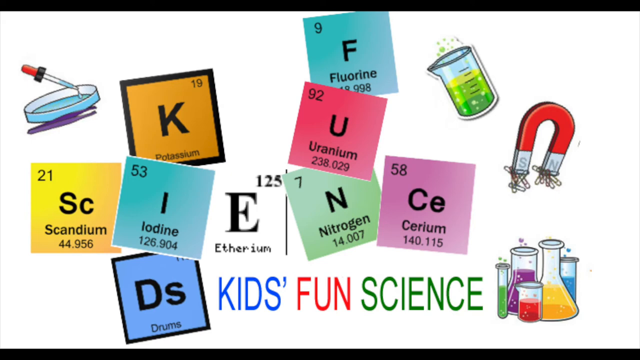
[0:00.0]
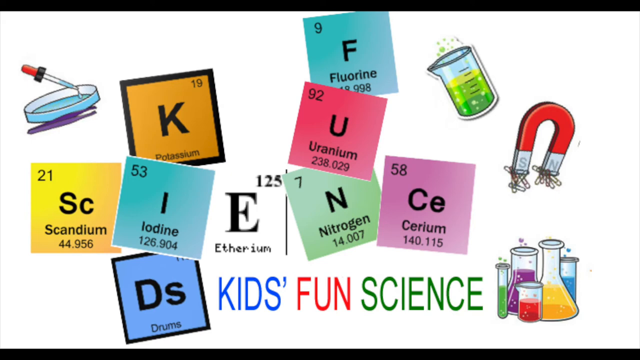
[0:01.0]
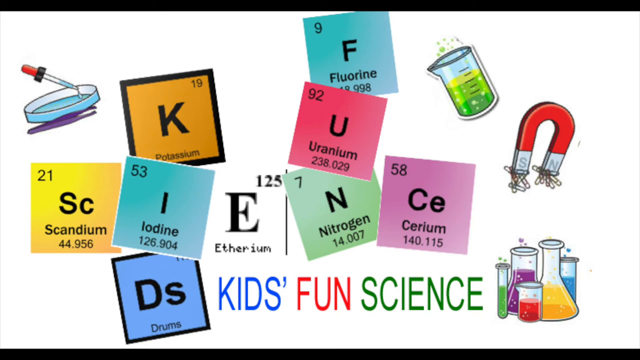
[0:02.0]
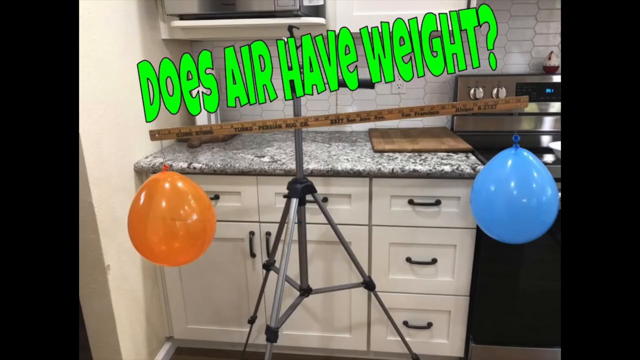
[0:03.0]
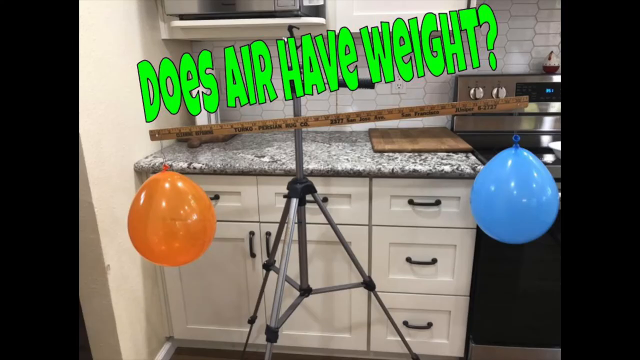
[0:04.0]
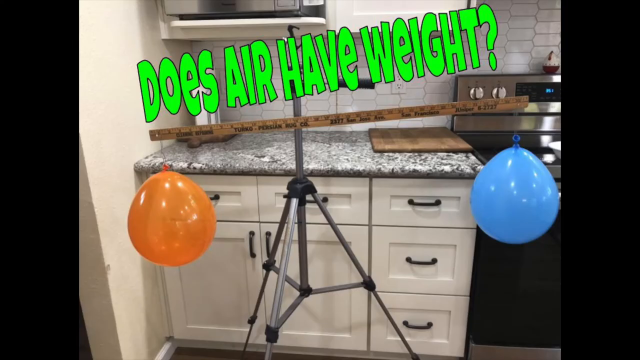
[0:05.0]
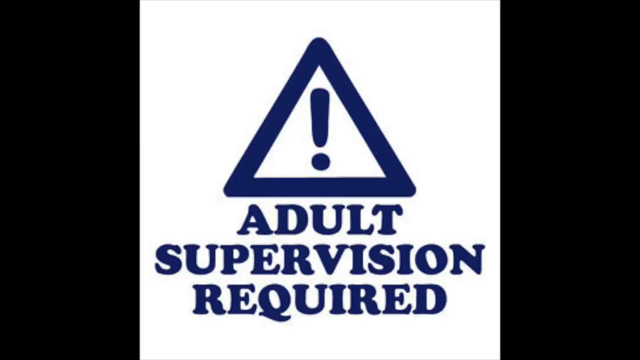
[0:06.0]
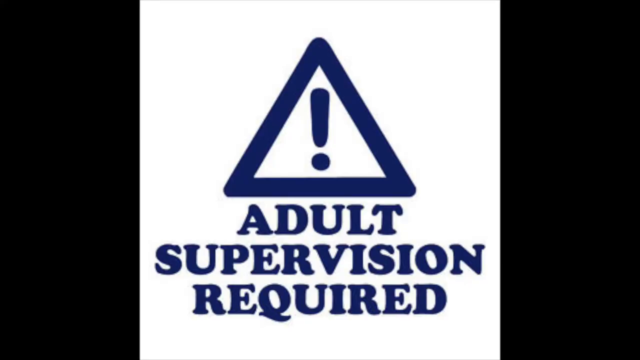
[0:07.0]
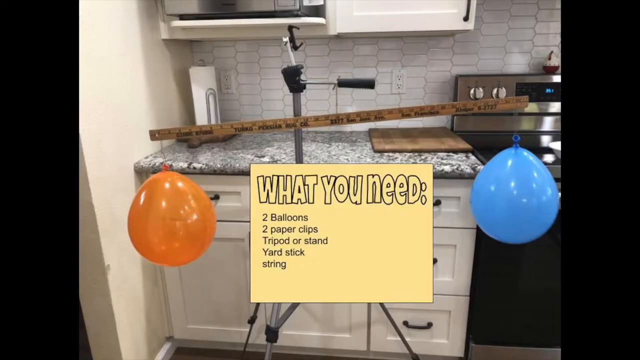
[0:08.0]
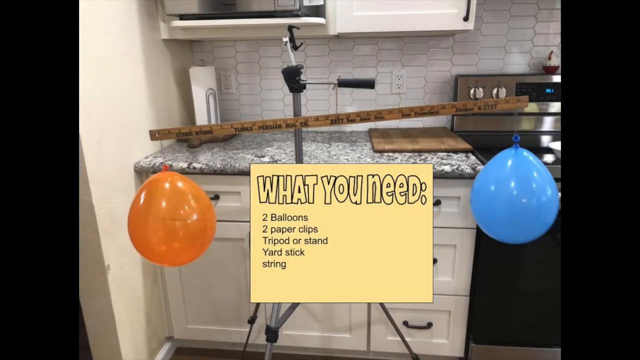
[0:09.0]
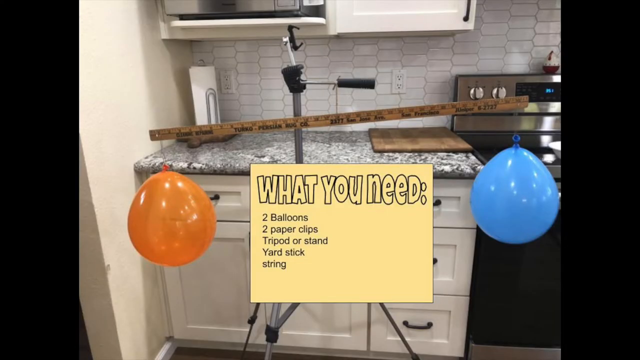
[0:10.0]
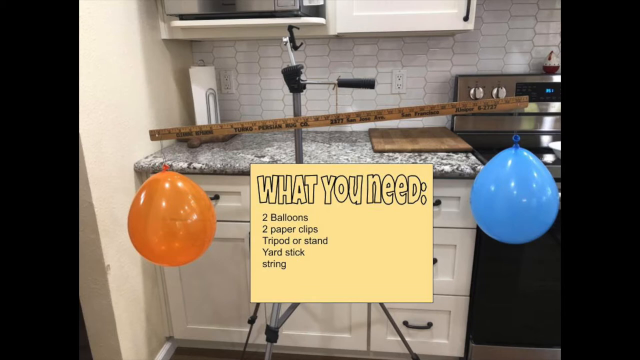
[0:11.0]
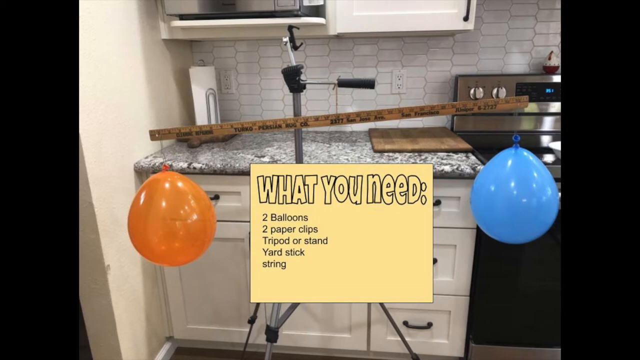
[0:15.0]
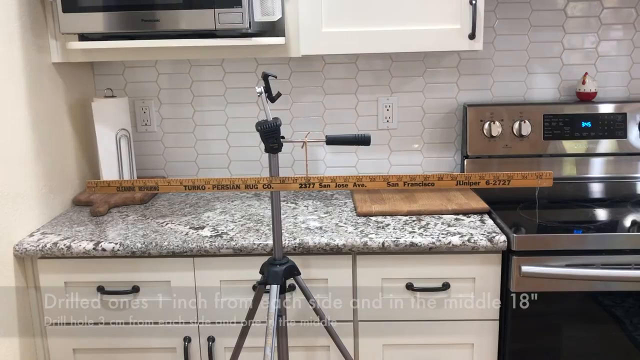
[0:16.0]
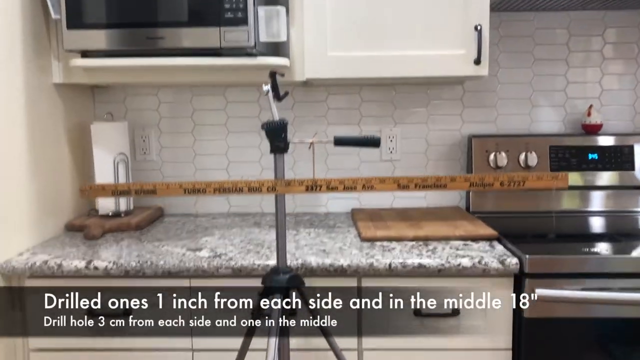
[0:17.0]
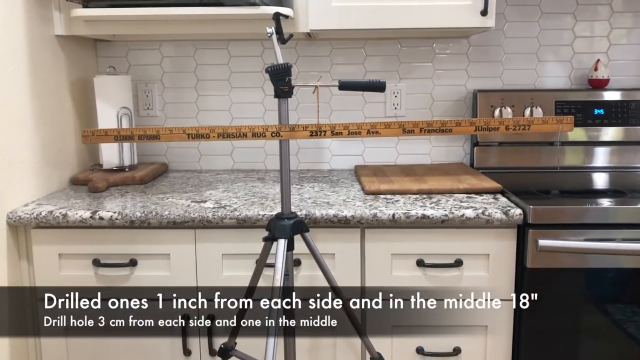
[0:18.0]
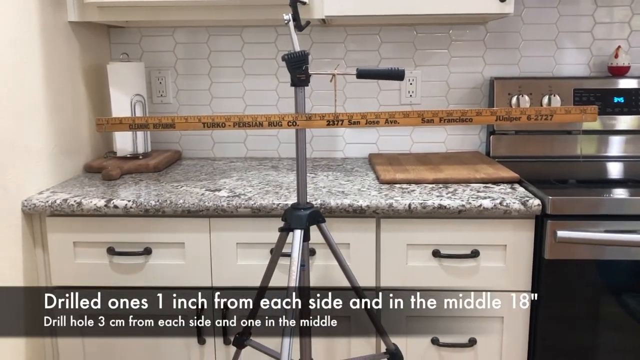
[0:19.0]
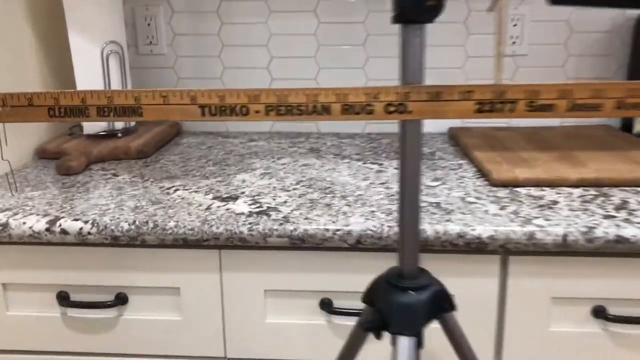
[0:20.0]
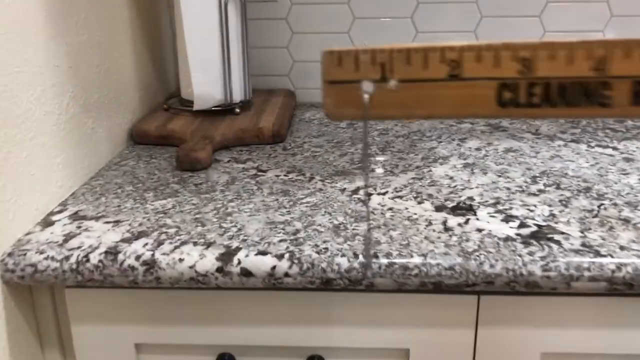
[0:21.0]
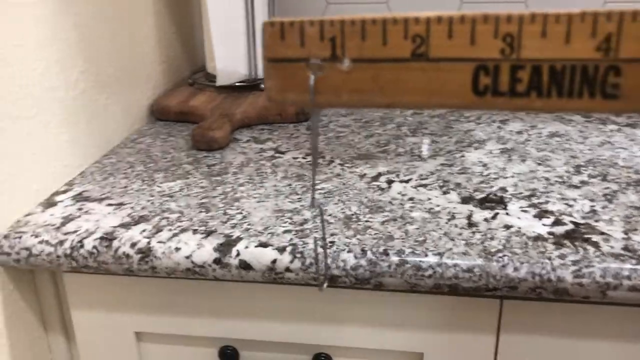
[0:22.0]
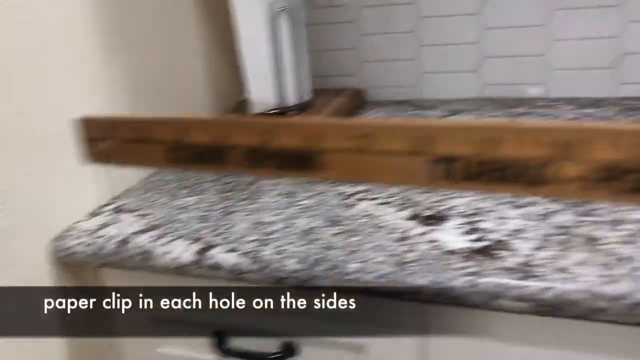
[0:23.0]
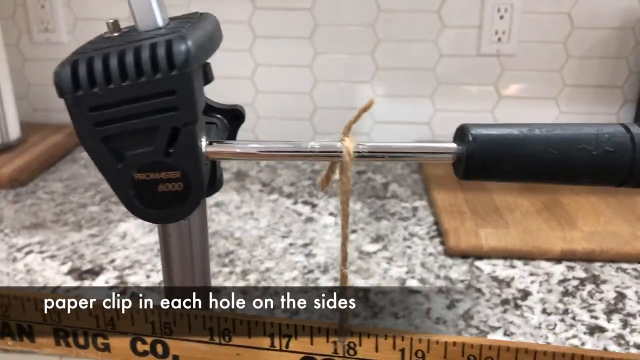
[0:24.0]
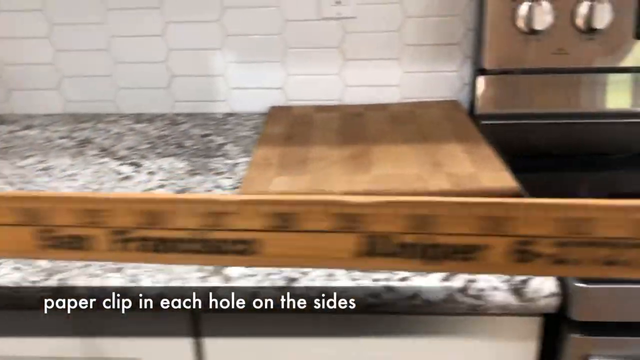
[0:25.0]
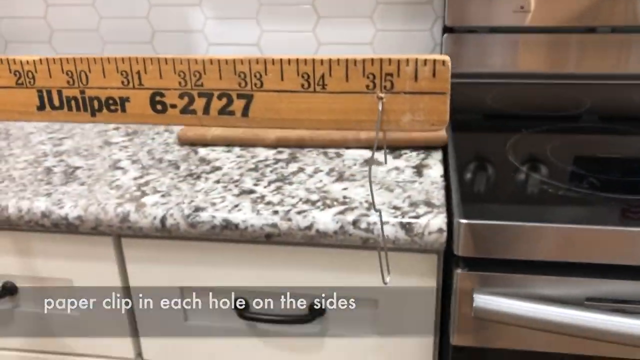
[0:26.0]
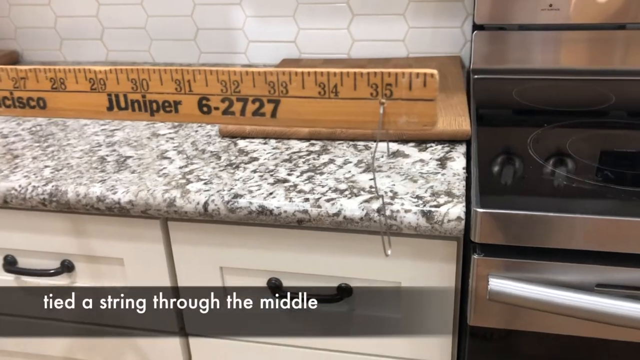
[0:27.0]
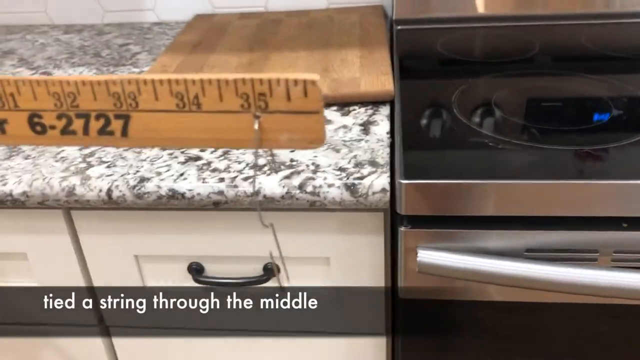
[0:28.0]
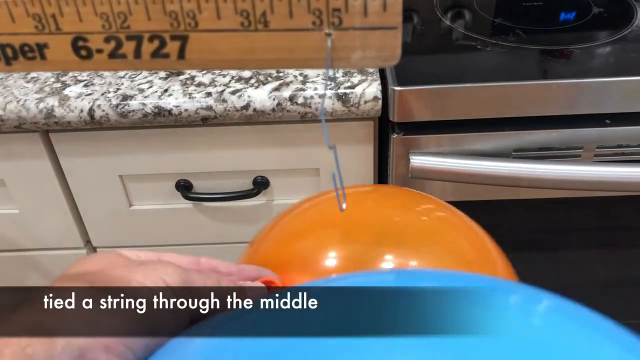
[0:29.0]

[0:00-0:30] On a white background for a kids' science video, a little dropper with a tray below it is in the top left, and various periodic table elements appear as little squares. On the right side is a magnet with some paper clips on it, and above that a little glass jar half full of green liquid. Various beakers are in the bottom right corner, and across the bottom "kids" is written in blue, "fun" in red and "science" in green. Next, two balloons appear, a green one on the left that is a little lower than the blue one on the right, on a ruler that is on a little stand in front of a marble counter; across the top in green it says "does air have weight?" An all-white screen follows with a blue triangle containing an exclamation point, and below it in blue, "adult supervision required." The view returns to the two balloons, with a square in the center between them that says "what you need" and a list of what is needed below it. The demonstration then begins with the ruler balancing on the front of the stand, a stove, microwave and counter in front of it, and directions shown below. The camera zooms down and goes up to the left side, where a paper clip goes through a hole, then moves to the top to show a string tied around it to keep it balanced, then goes to the right side, which has a hole with a paper clip through it, as the two balloons come up from the bottom.